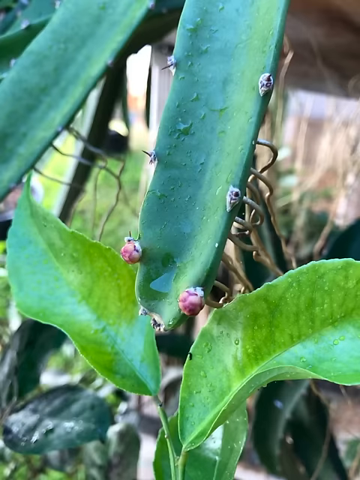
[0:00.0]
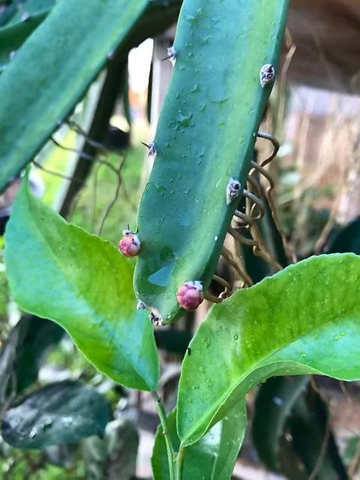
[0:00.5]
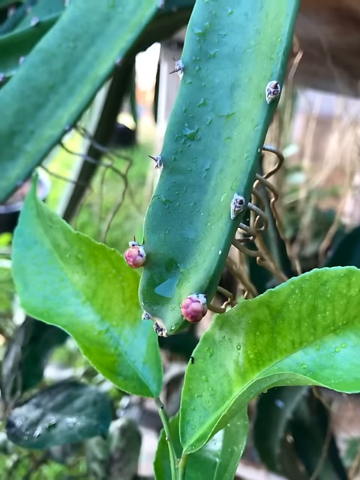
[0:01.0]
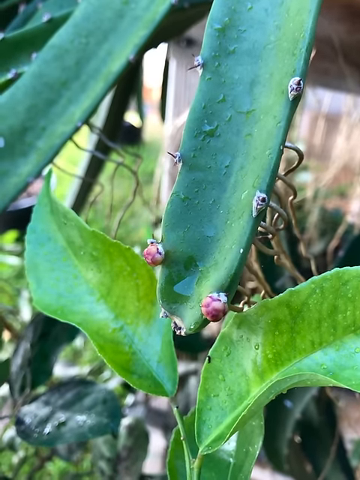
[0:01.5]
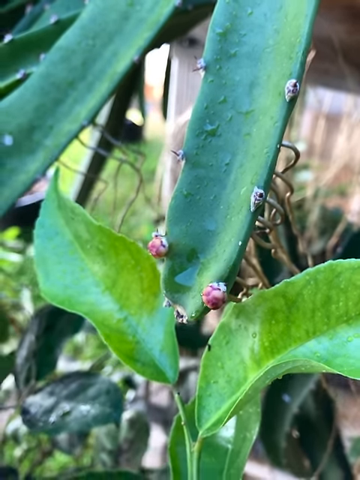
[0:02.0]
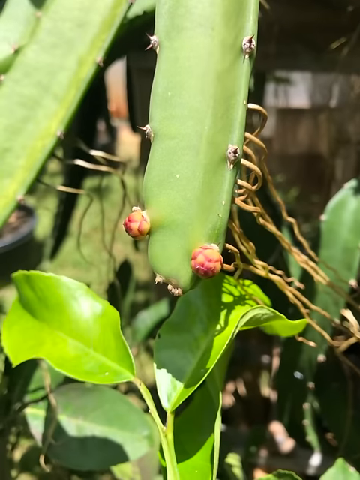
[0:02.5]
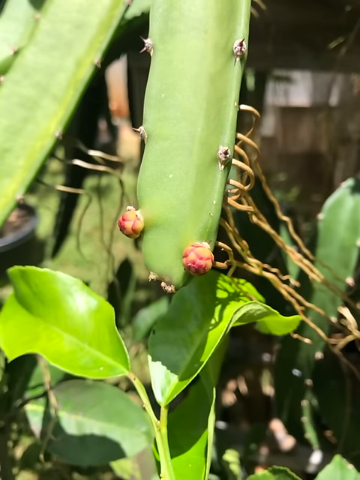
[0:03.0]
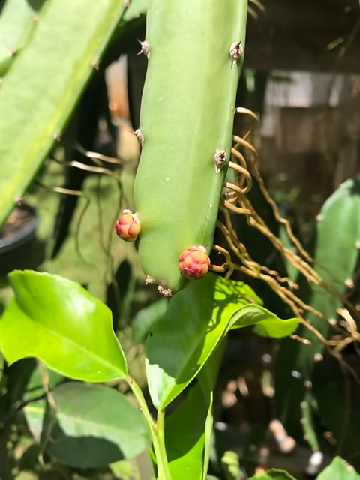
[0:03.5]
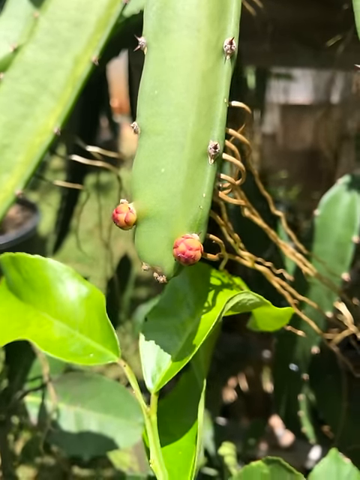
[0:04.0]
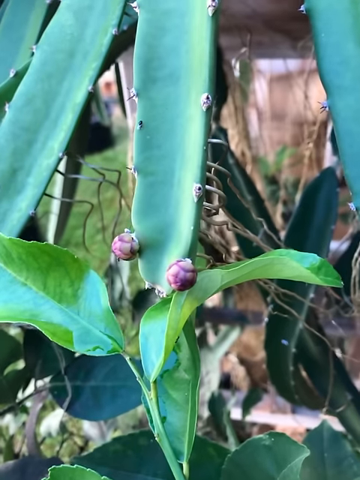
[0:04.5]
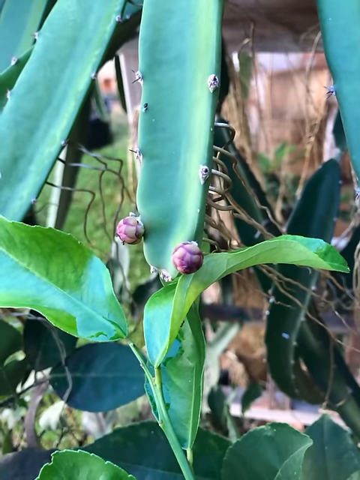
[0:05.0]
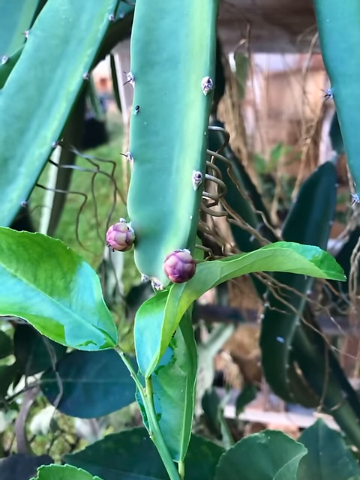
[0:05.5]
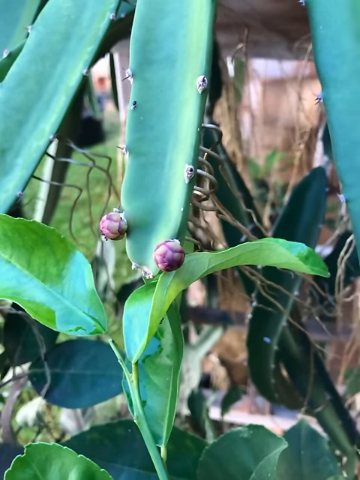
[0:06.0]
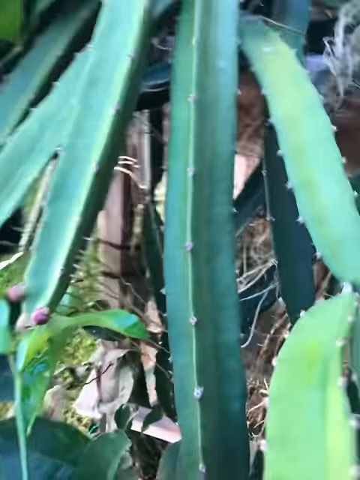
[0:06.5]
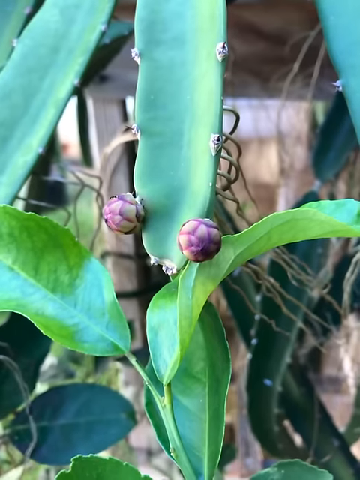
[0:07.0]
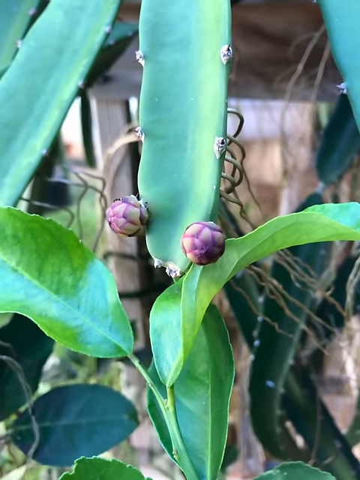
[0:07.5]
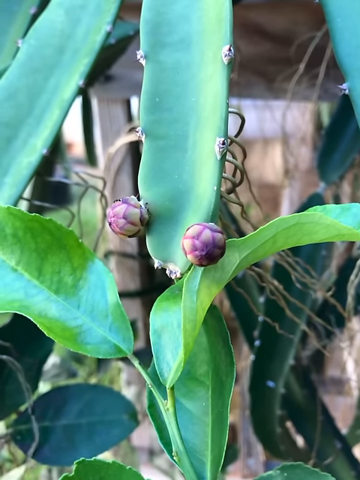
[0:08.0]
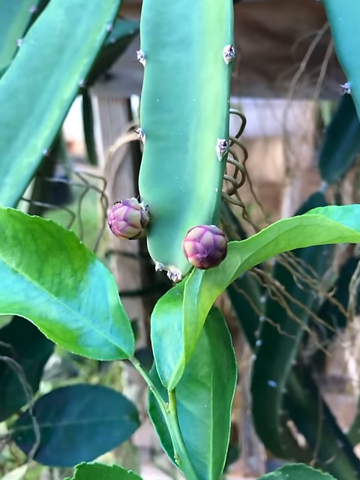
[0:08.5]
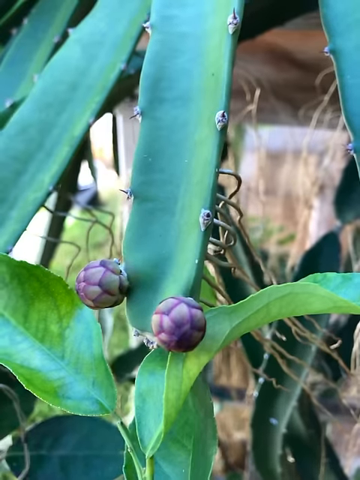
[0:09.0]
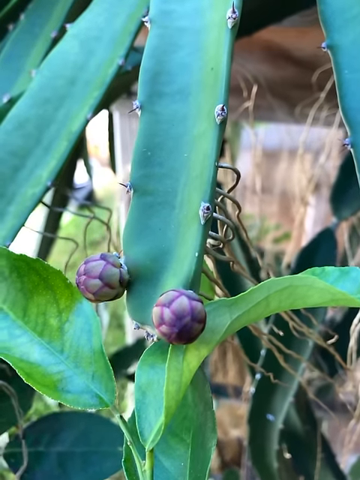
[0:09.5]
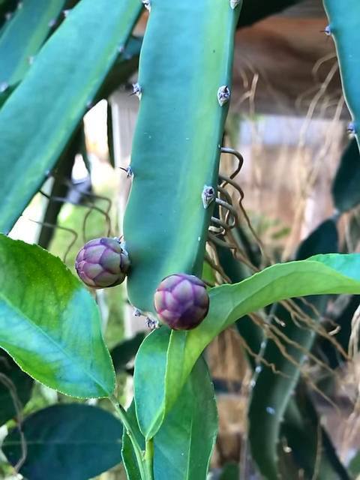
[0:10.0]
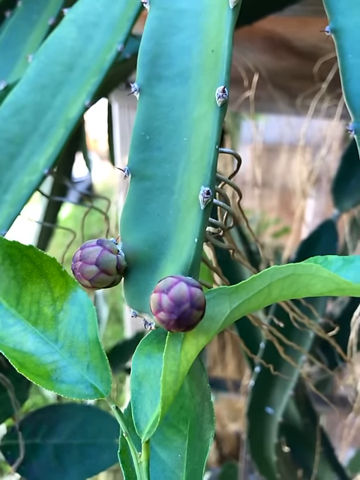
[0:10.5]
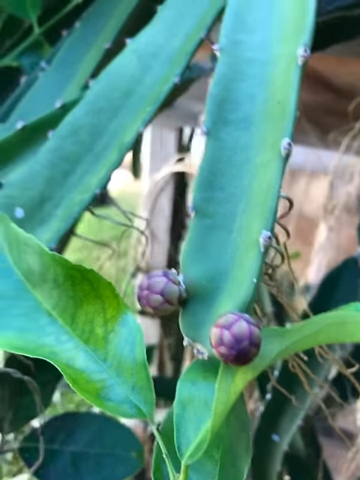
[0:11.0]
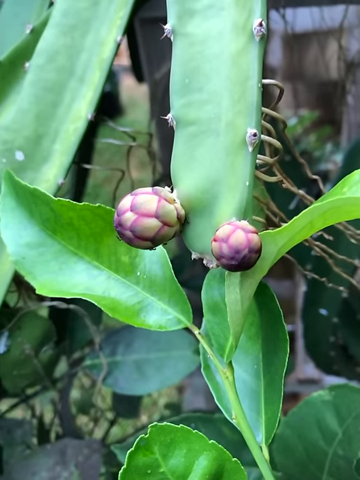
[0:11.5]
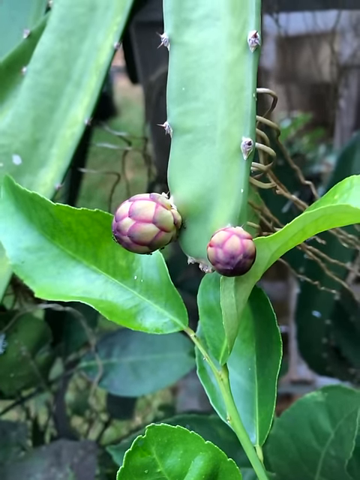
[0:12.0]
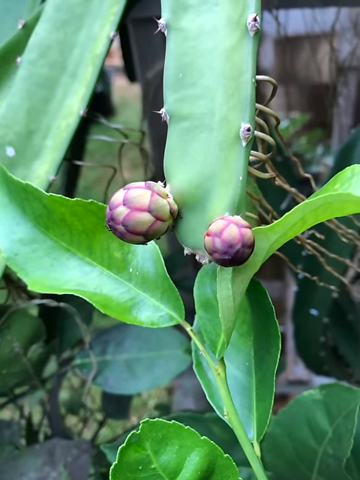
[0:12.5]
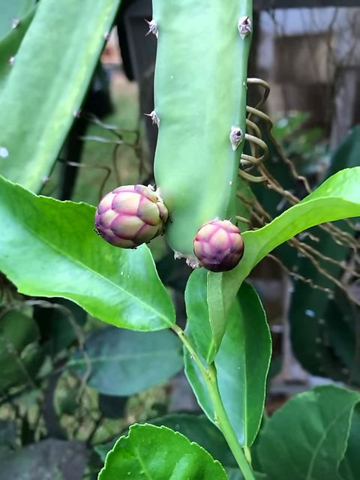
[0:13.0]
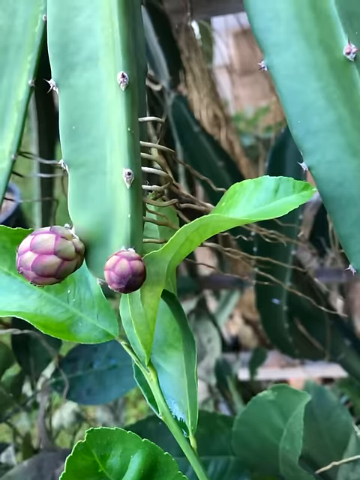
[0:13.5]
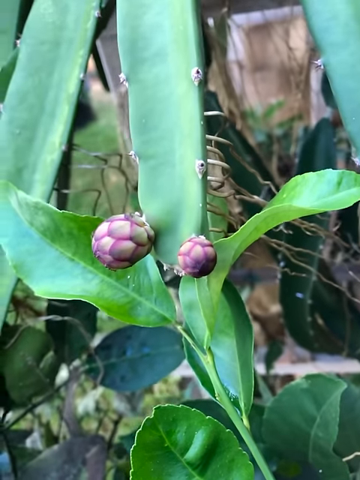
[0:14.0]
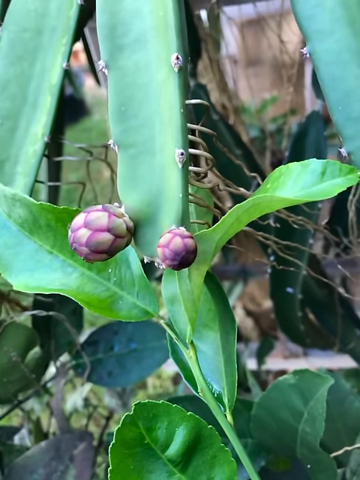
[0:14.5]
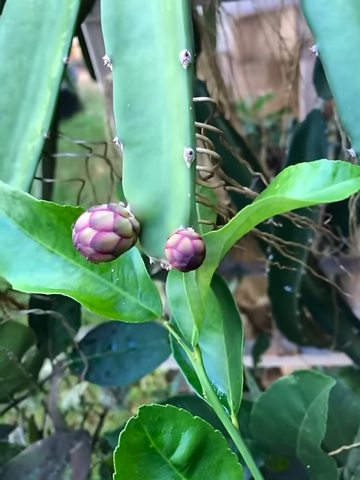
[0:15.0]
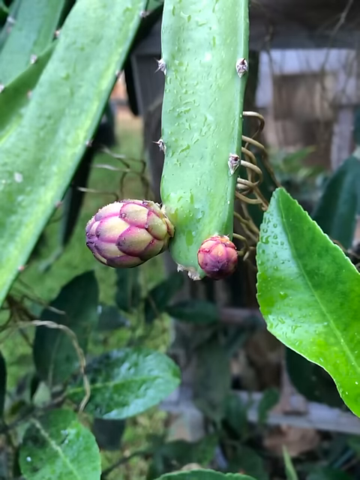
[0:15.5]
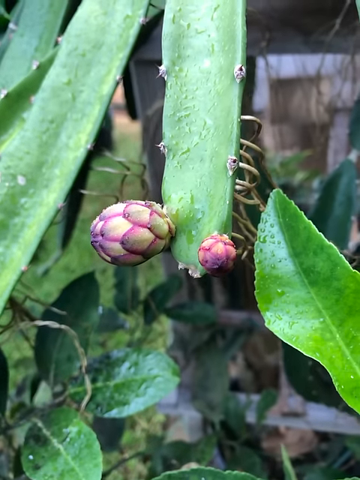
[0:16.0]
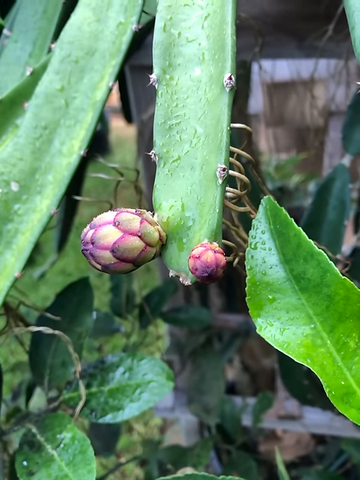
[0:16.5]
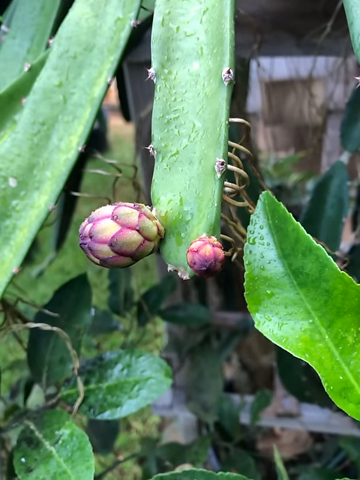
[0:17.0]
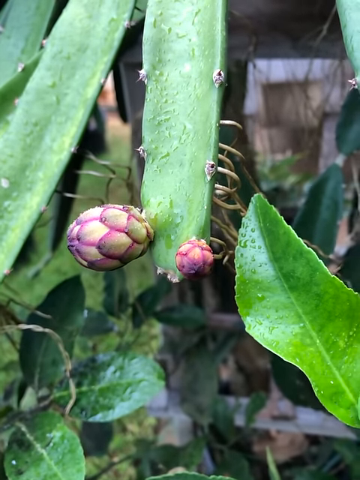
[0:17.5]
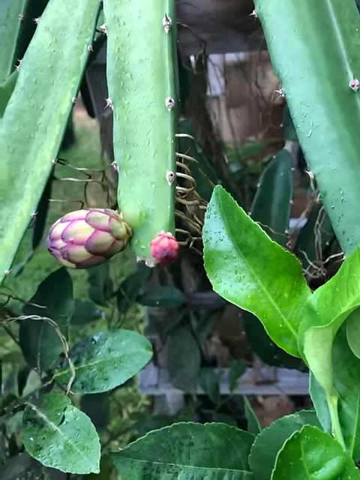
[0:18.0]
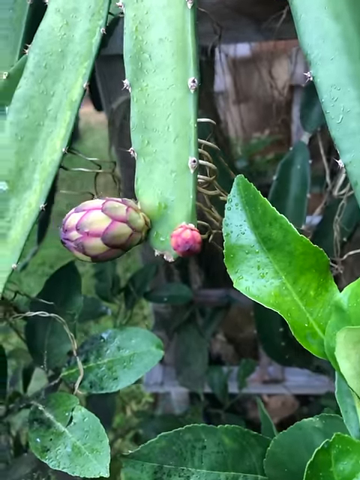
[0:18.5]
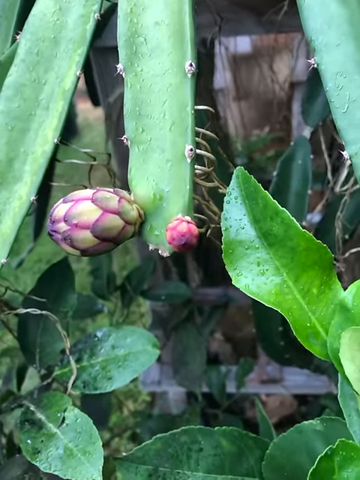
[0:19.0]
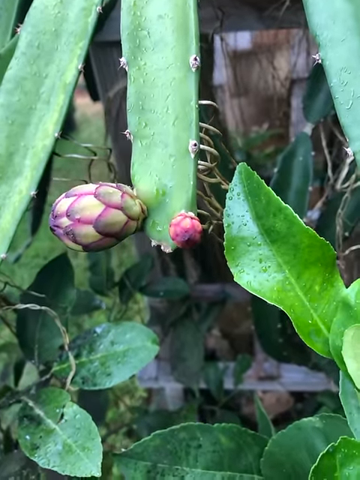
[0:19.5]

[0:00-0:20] A series of short video clips shows a plant growing, apparently as a time-lapse. The plant is somewhat waxy and has a part that comes down. One part looks somewhat like a leaf, somewhere between a leaf and a cactus, with no large spikes, just short spikes along the sides. Twisted fencing is underneath, possibly to keep it in place; it looks like small rusted iron bits of fencing bent into place. Regular leaves underneath are growing upwards. On the plant are two little pinkish green dots; the left one grows larger over time, while the right one grows only slightly larger. As they grow, their shapes become visible: they have what look like scales, similar to a dragon fruit, pink with greenish spots in the center of each cell. The left one gets very large and very long and starts to protrude outwards. Sparse plant life is in the background, only slightly green behind these plants and mostly brown in the distance.